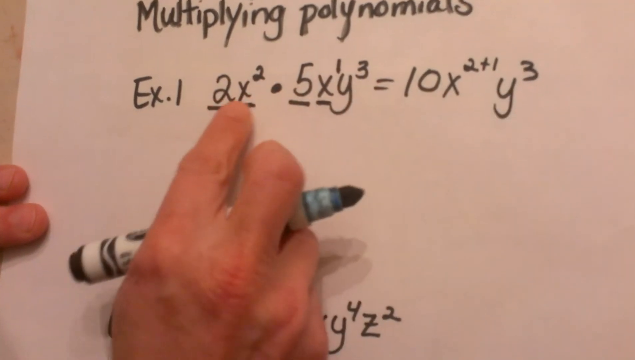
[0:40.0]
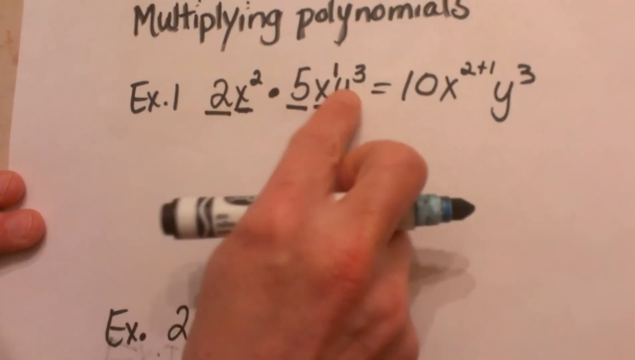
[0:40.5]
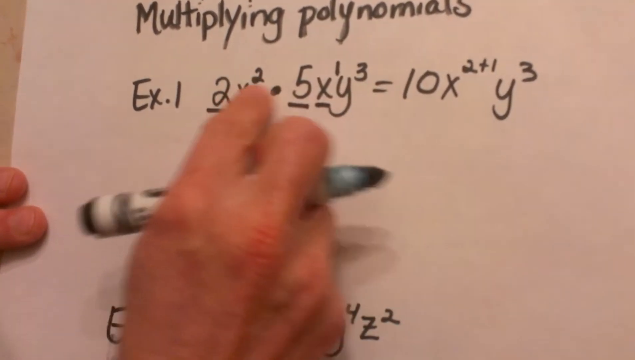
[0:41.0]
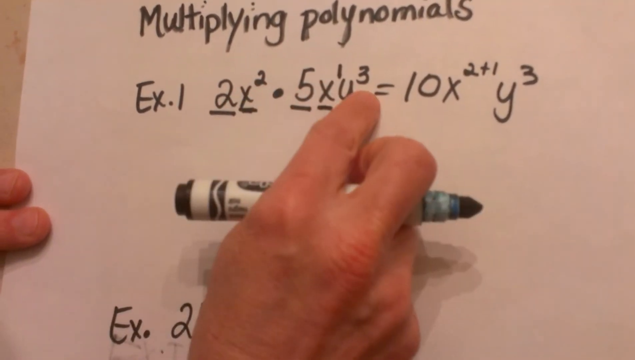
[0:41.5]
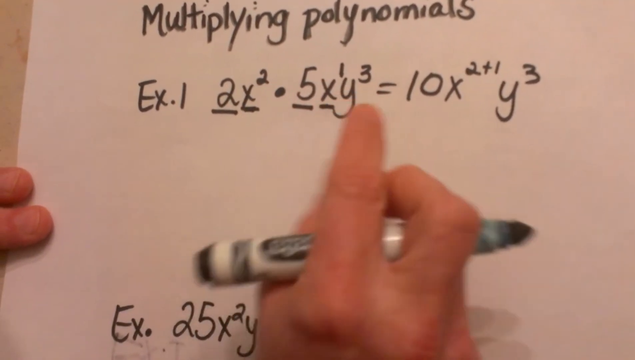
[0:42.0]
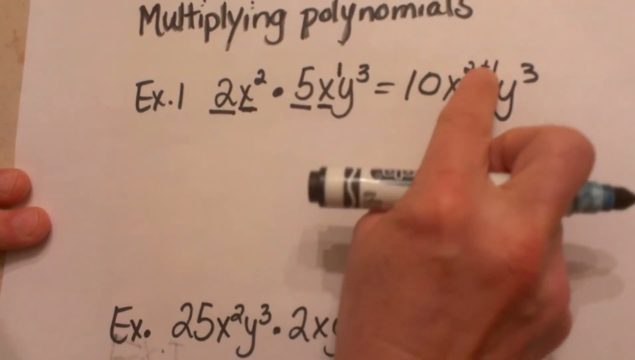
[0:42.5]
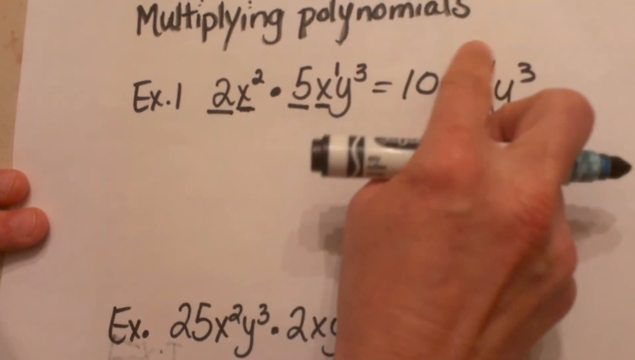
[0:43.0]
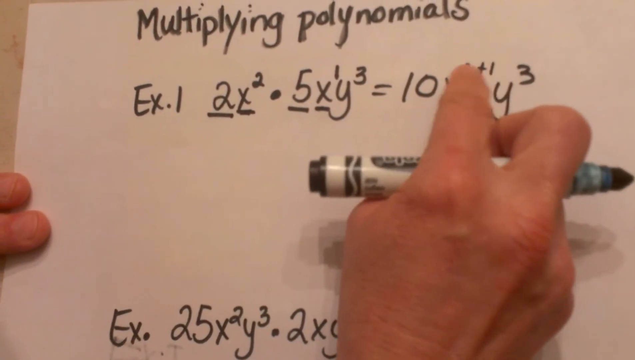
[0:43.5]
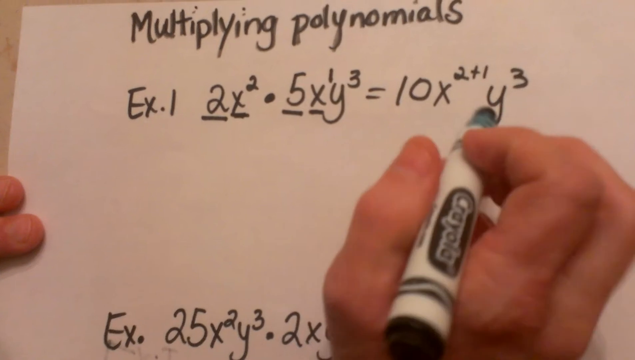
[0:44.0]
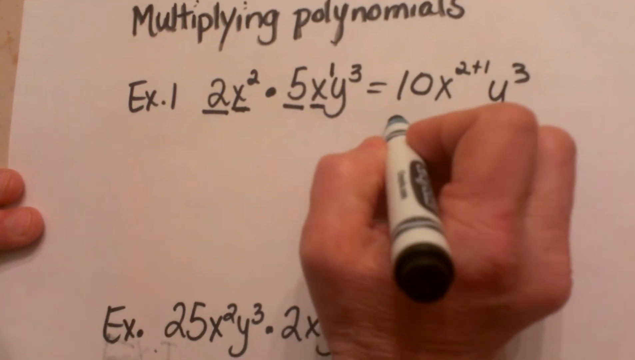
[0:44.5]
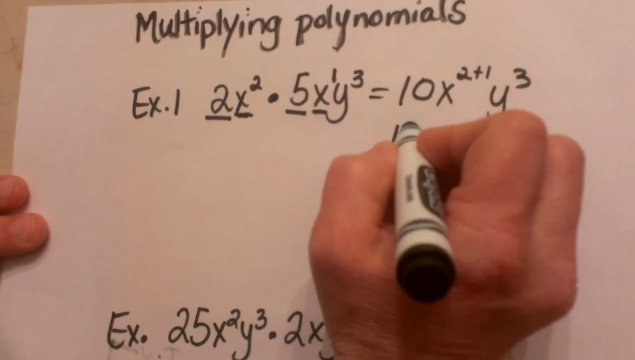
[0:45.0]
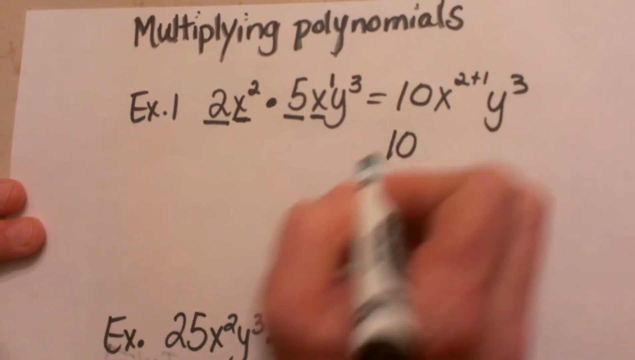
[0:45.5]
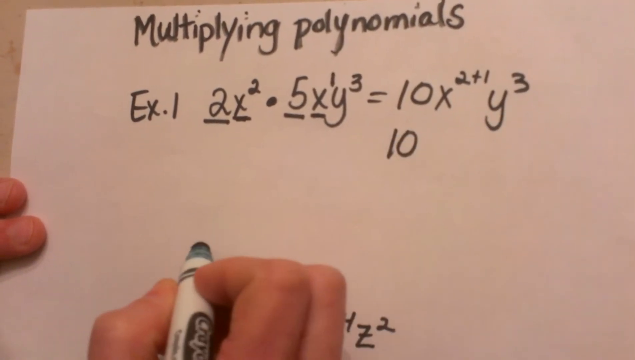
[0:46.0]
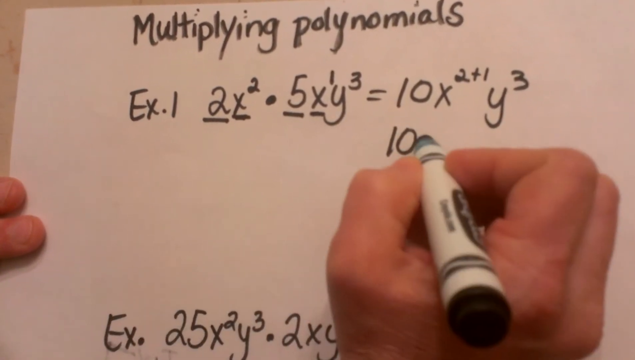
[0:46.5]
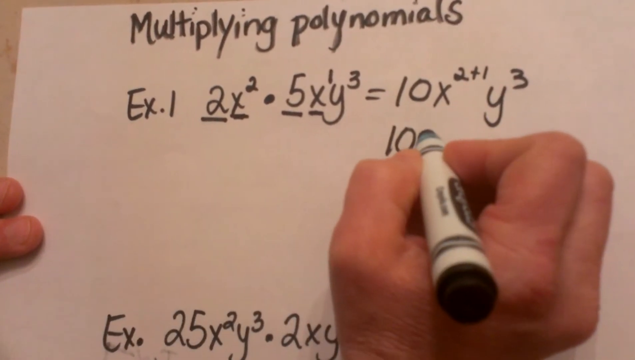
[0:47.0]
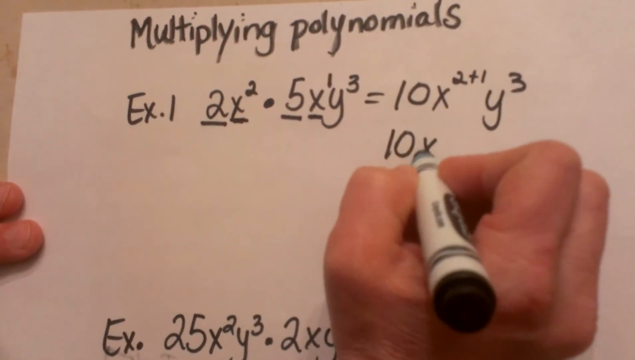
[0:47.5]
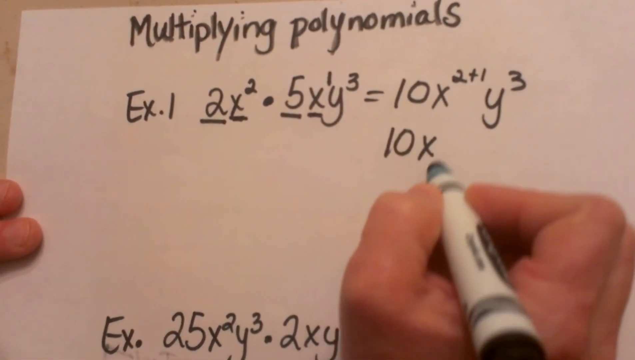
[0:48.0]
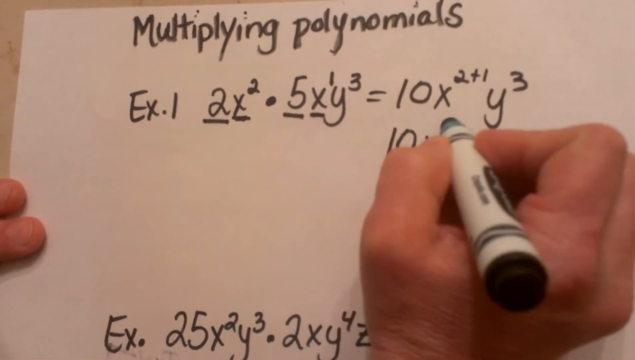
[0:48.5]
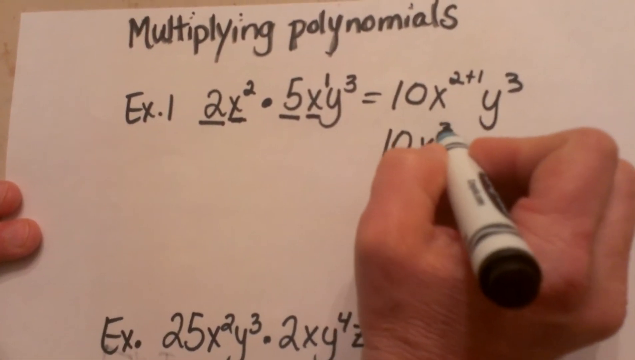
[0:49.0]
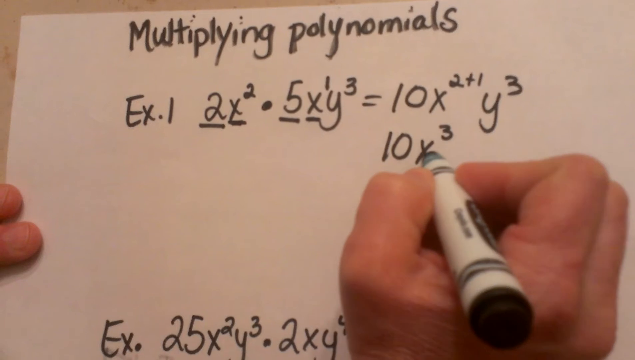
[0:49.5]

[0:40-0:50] The entire example one is on the screen: 2x exponent 2 minus 5xy exponent 3. The facilitator has equated it to 10x exponent 2 plus 1, with y exponent 3. He then adds the exponents 2 plus 1 to get 3, writing 10x with that exponent and bringing down y exponent 3.